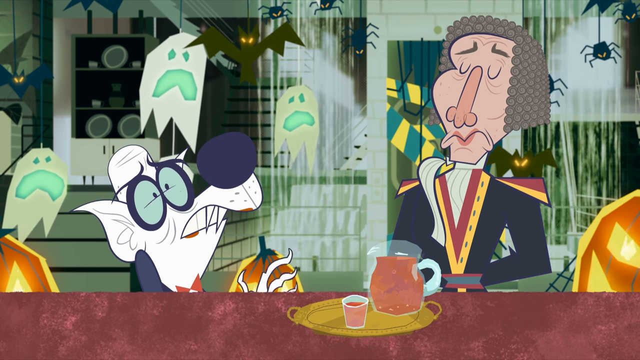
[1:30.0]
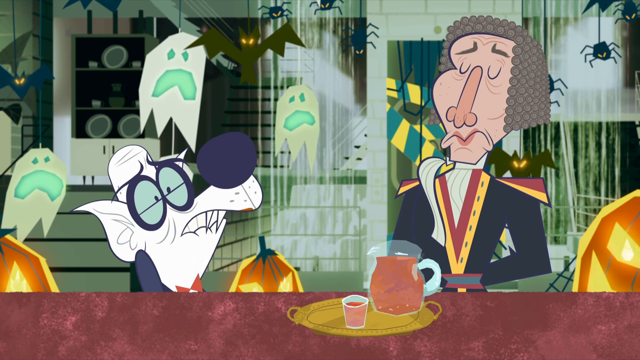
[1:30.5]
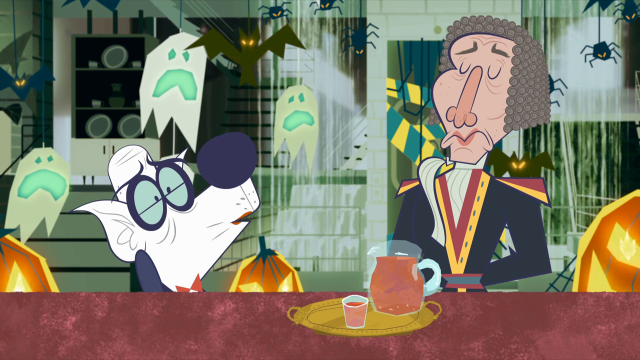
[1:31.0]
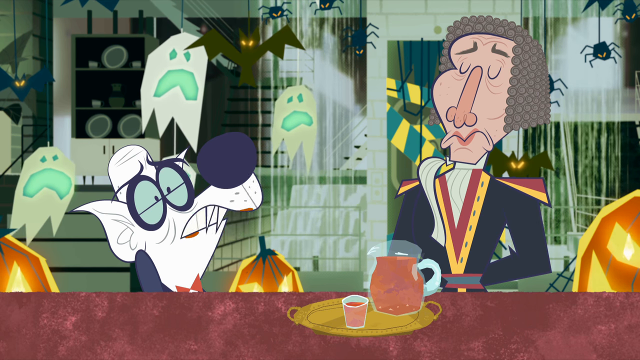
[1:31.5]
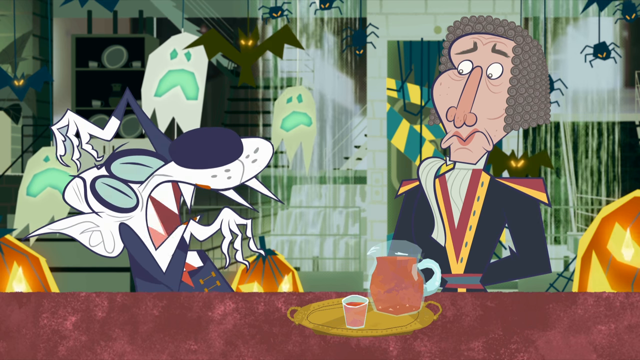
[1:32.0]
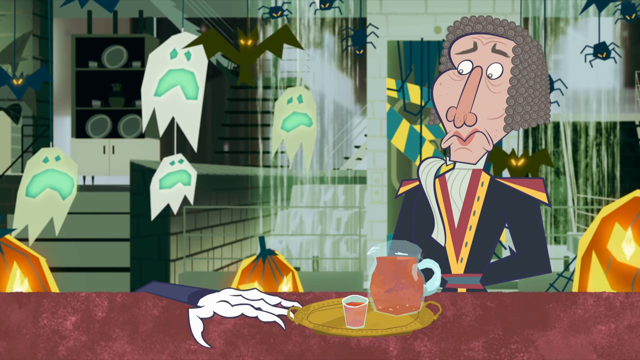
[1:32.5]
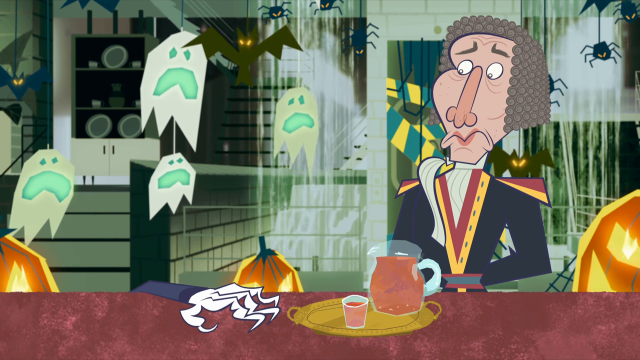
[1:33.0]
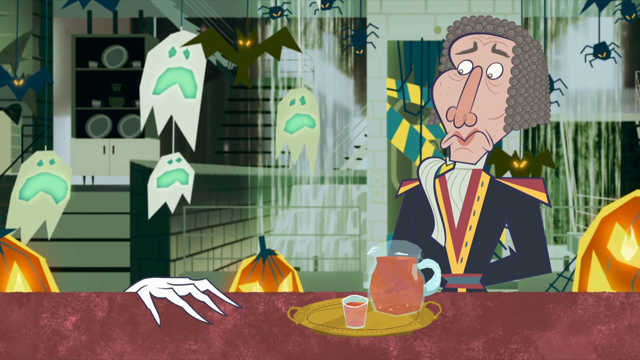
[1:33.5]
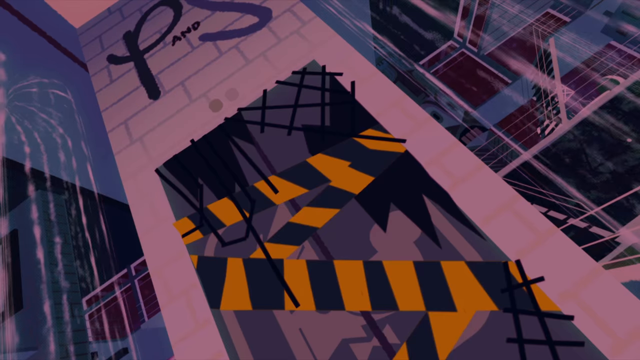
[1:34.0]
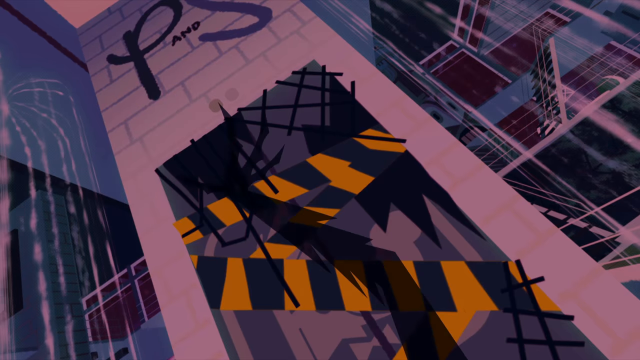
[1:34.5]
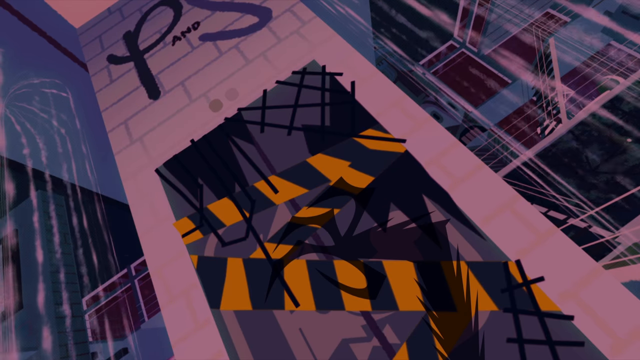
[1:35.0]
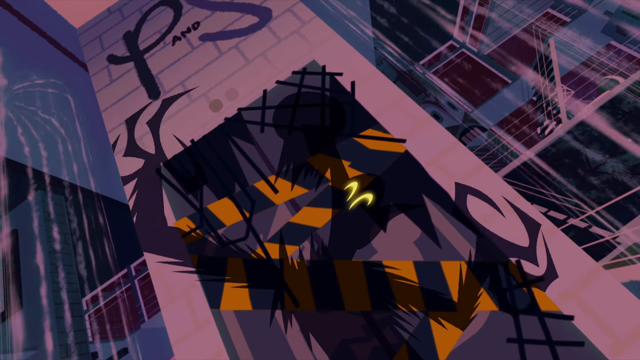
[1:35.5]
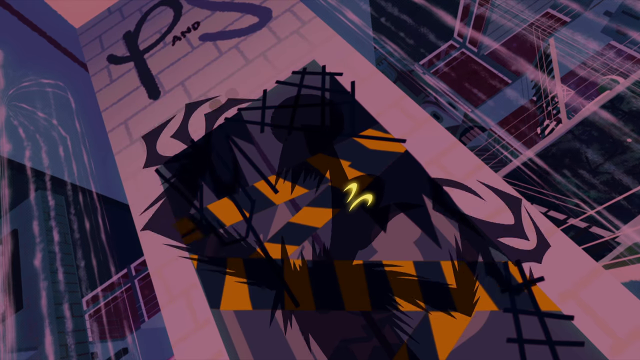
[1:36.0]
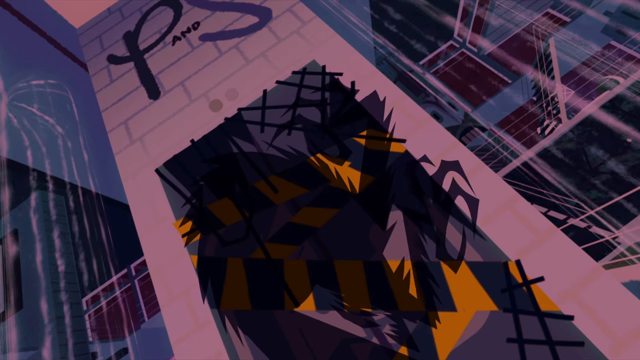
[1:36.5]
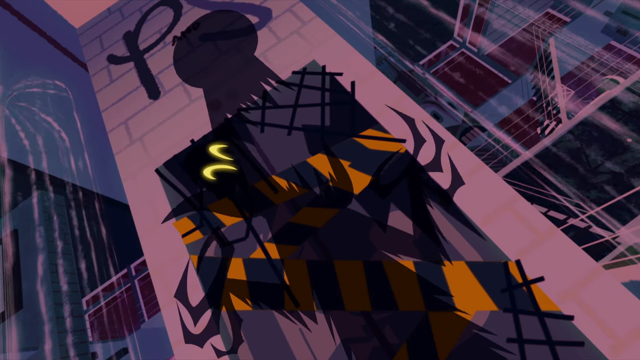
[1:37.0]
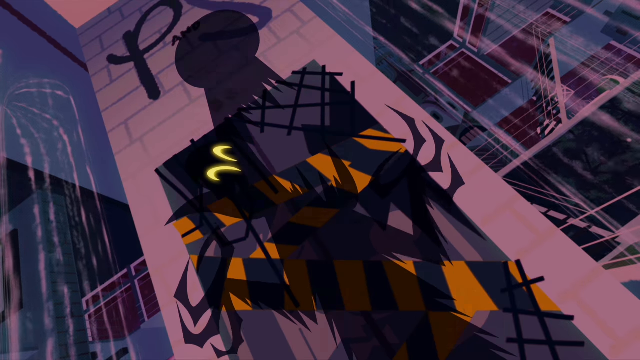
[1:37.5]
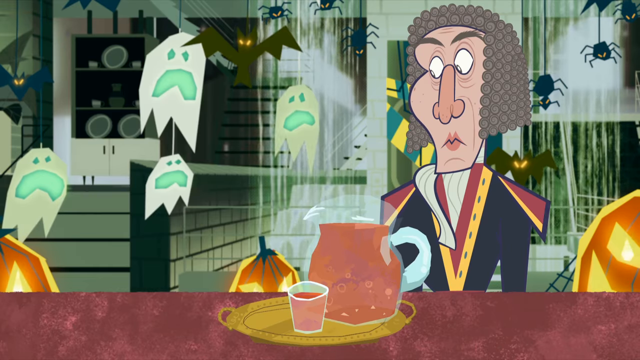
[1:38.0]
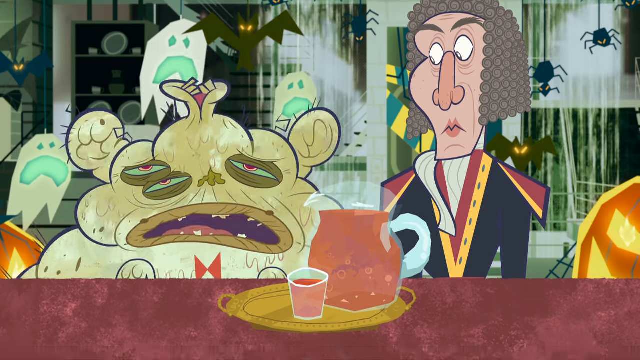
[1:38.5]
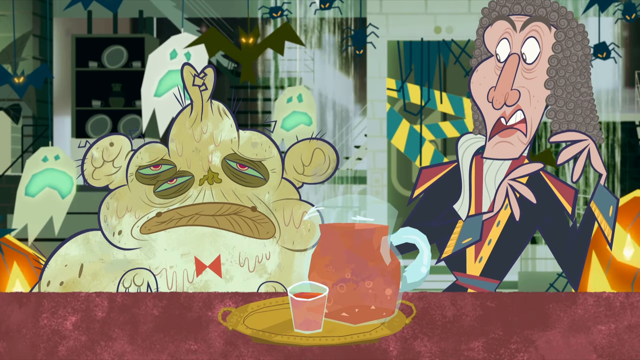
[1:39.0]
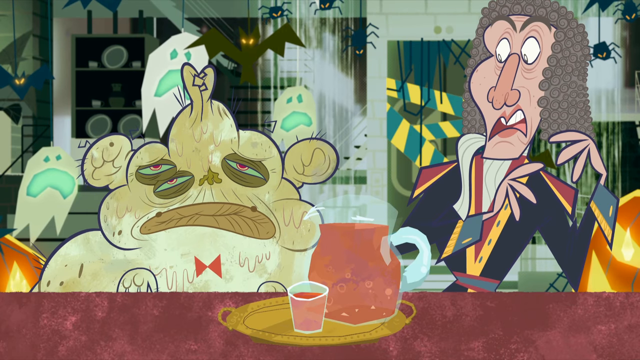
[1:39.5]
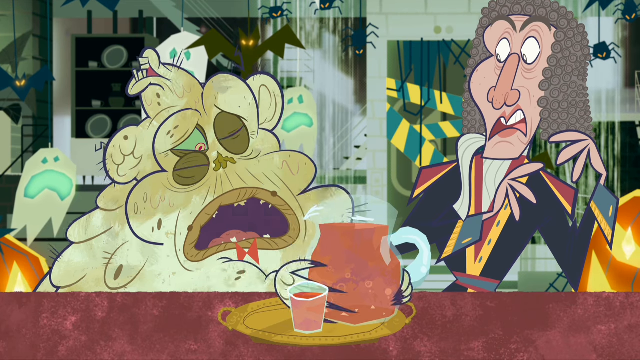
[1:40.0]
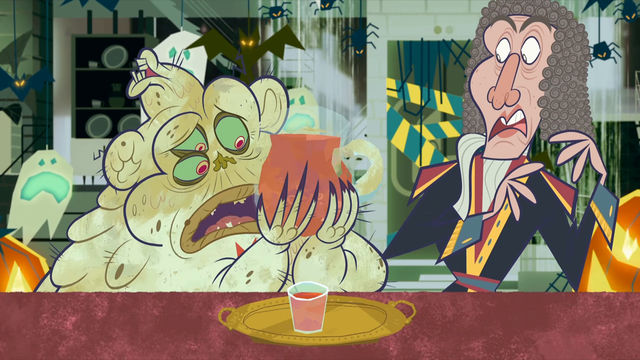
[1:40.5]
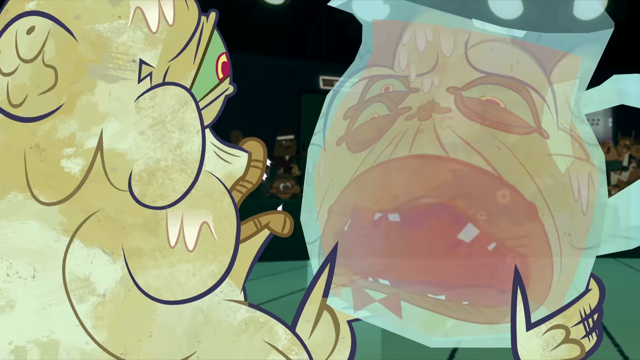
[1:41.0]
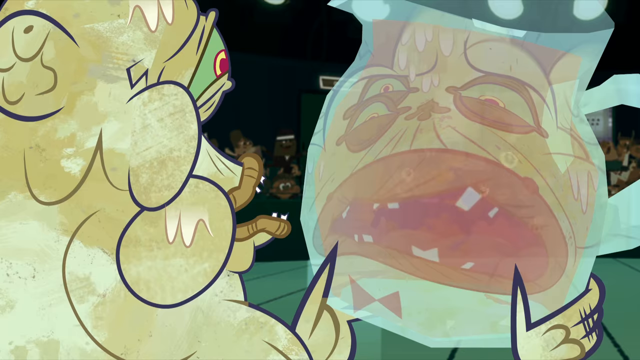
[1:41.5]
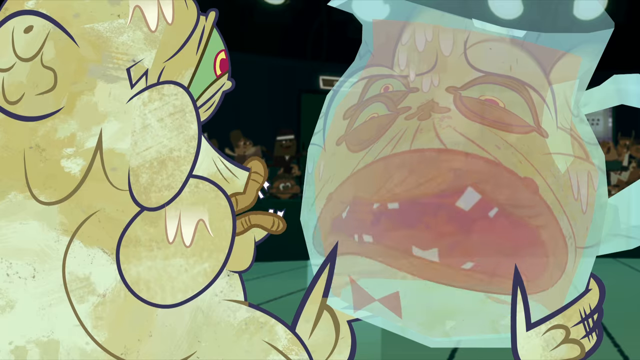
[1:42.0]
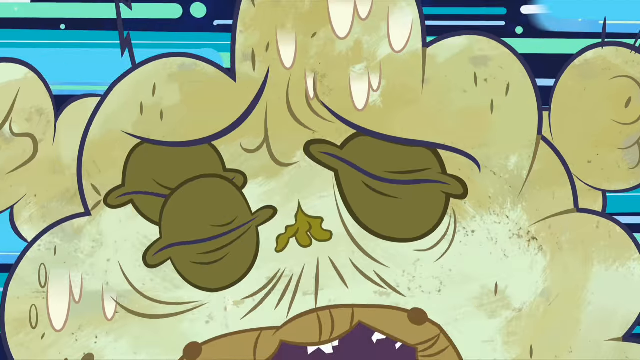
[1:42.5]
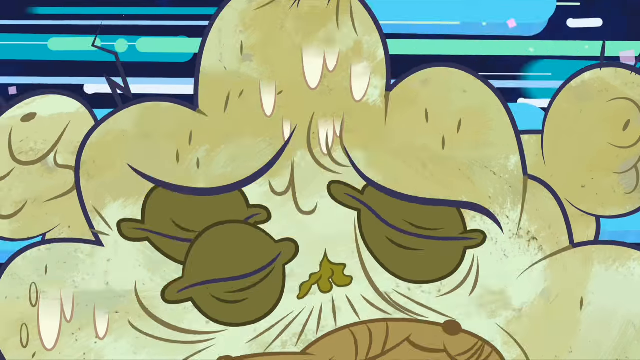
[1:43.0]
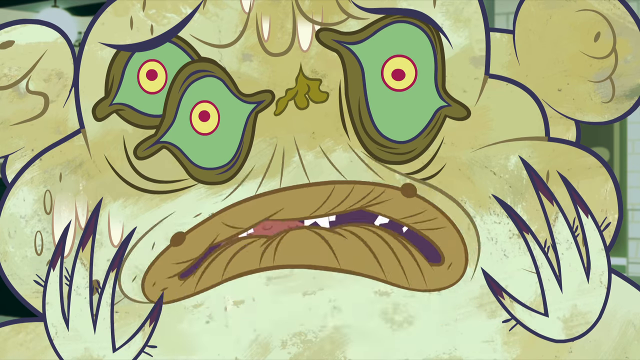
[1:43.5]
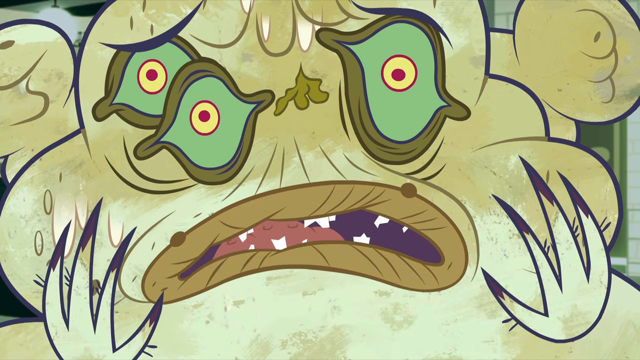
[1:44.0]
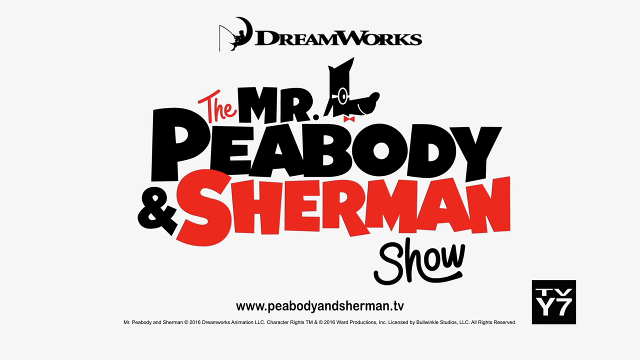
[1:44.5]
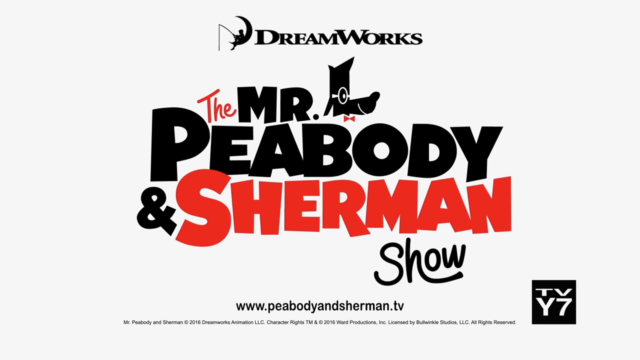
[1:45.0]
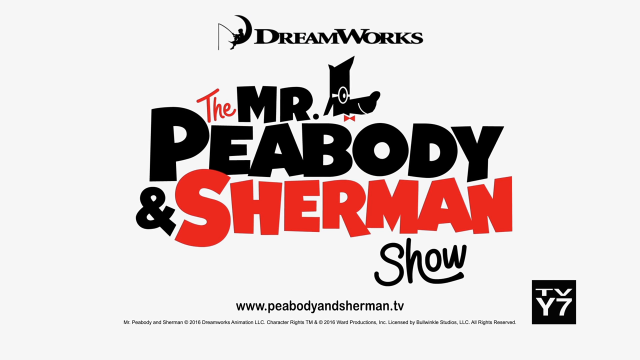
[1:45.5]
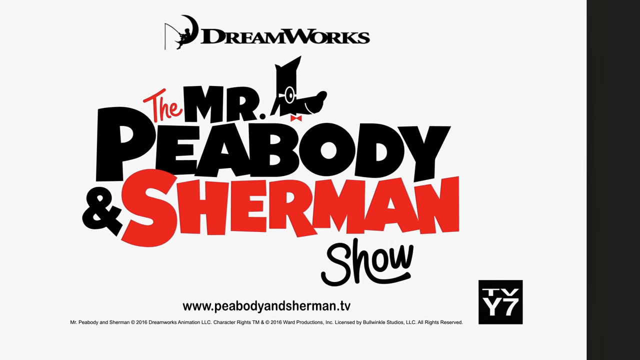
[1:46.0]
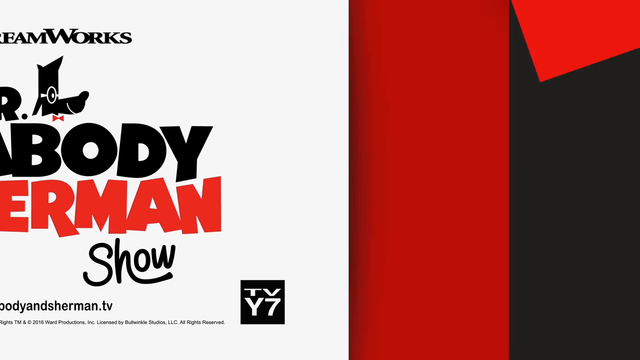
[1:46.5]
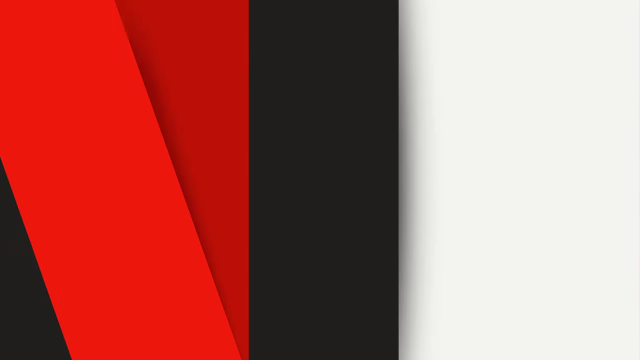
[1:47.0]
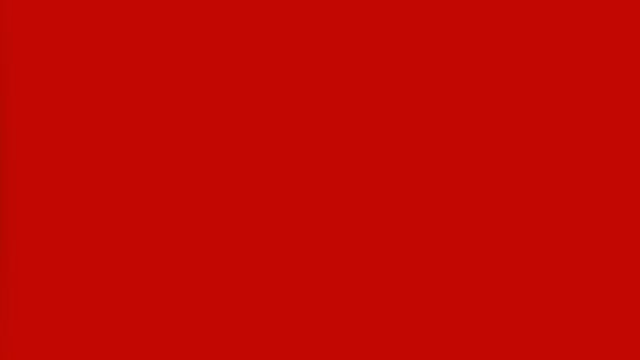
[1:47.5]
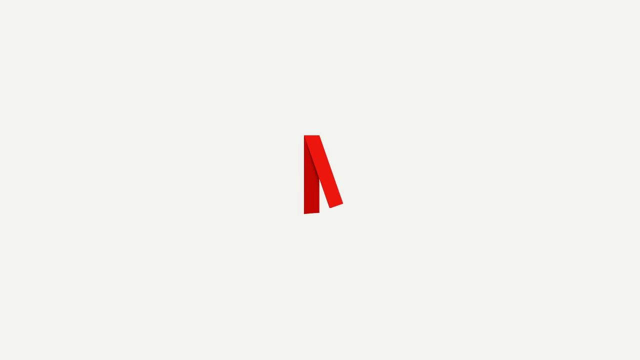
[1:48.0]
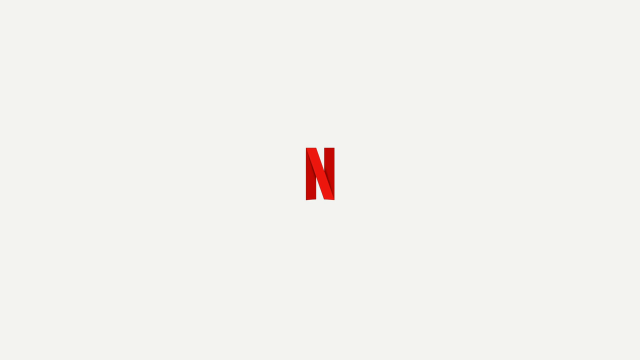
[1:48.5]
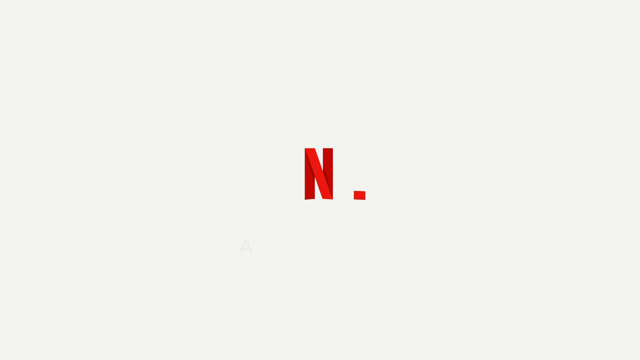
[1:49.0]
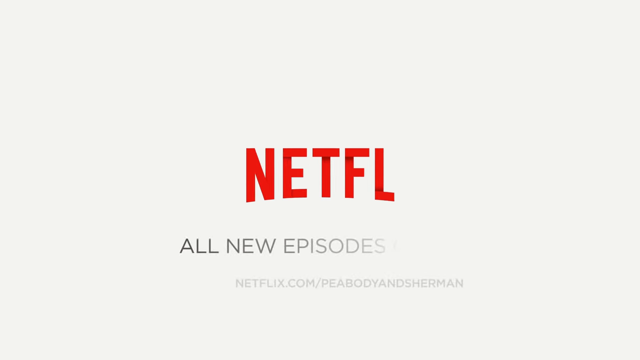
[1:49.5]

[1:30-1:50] The dog looks more concerned or worried and grabs something. He then kind of passes out, looking as if he was poisoned, and falls back. A transformation sequence follows, shown not directly but as a shadow outline. He transforms into a hideous monster almost inspired by Frankenstein, shown almost as if crawling out of a grave, and then into a blob-like, mutated monster completely different from how he looked. He views himself in a mirror, very worried and concerned; the mirror shot is centered, with his face at the front of the frame.